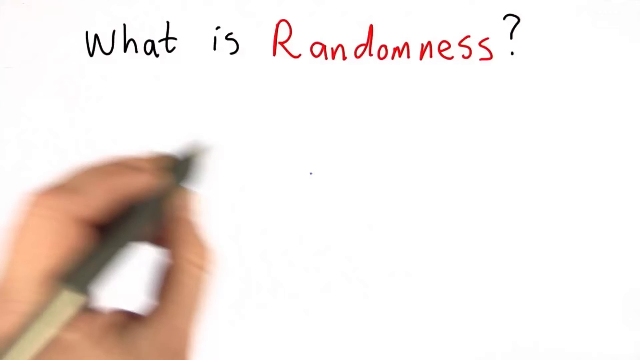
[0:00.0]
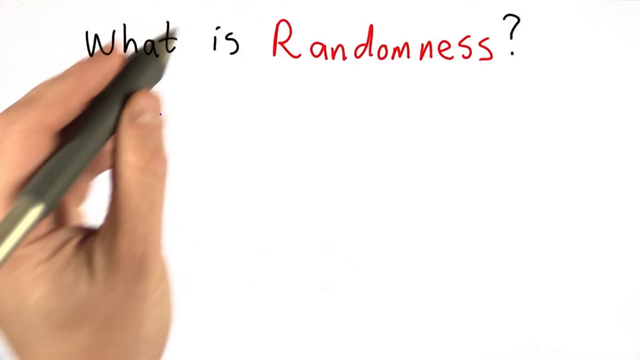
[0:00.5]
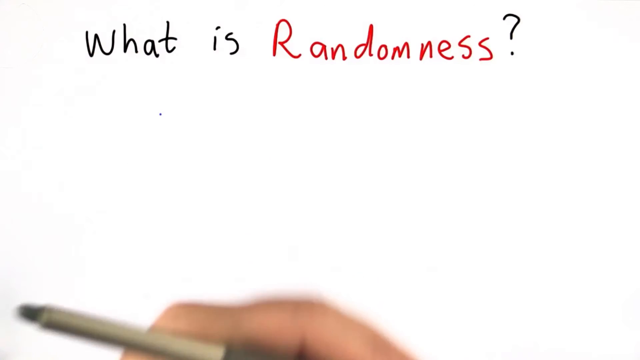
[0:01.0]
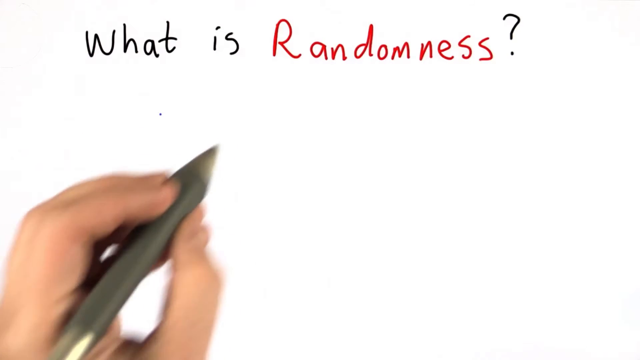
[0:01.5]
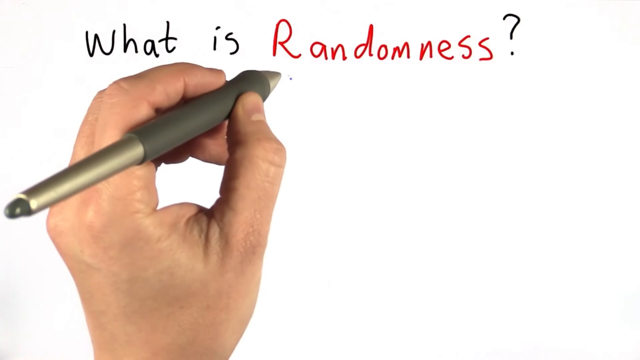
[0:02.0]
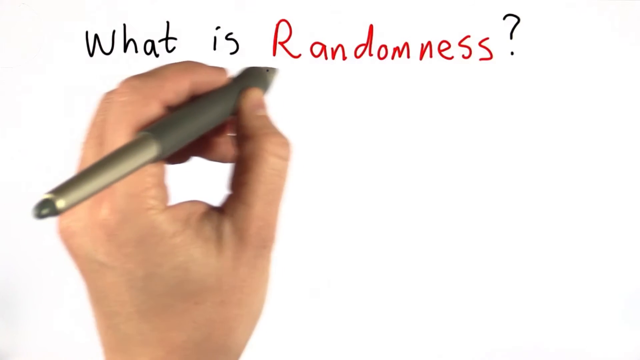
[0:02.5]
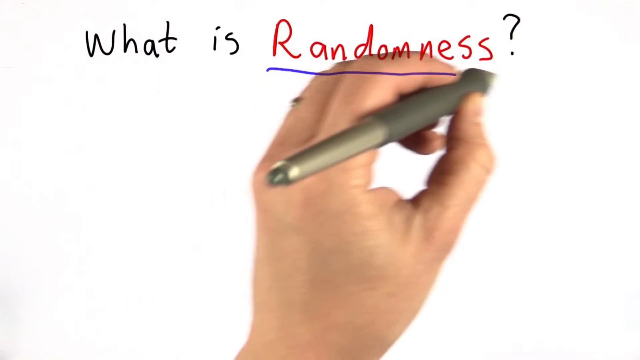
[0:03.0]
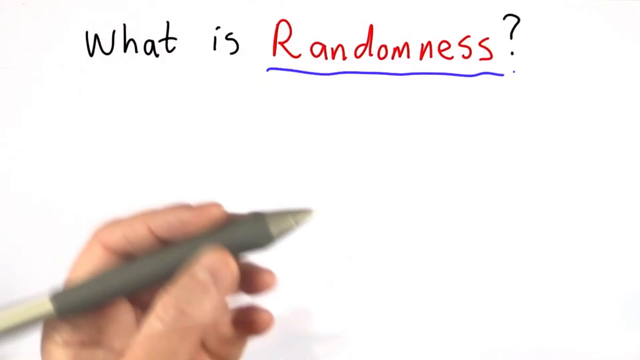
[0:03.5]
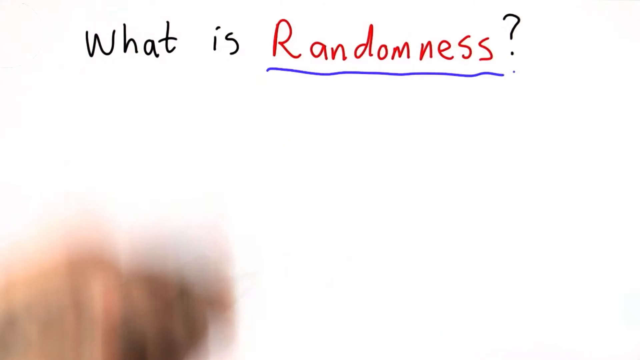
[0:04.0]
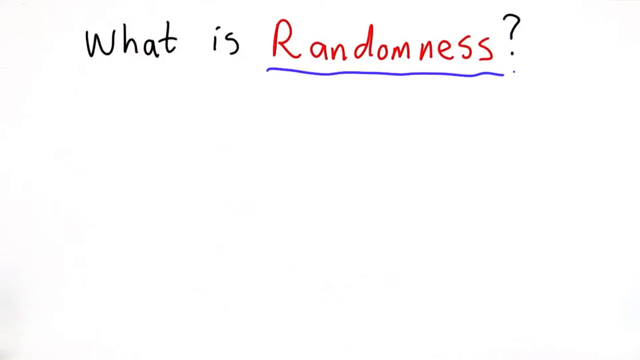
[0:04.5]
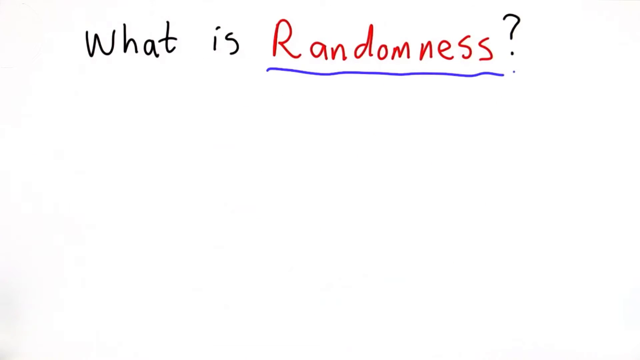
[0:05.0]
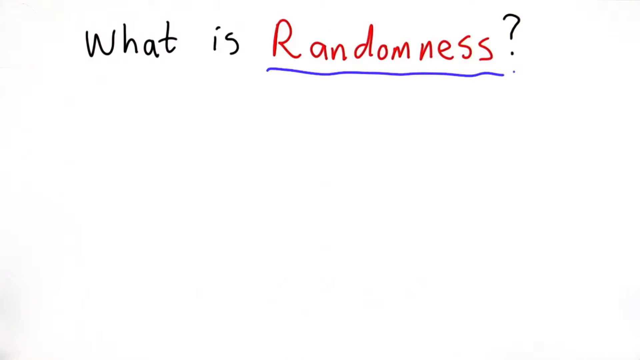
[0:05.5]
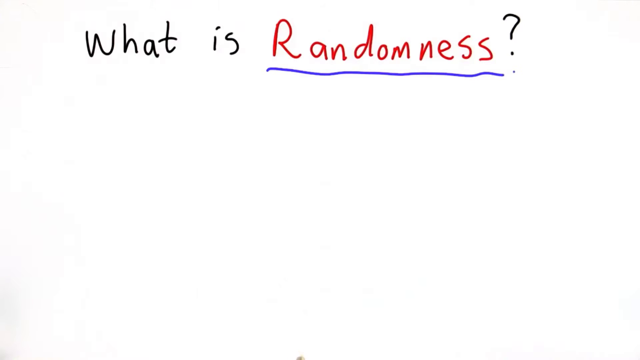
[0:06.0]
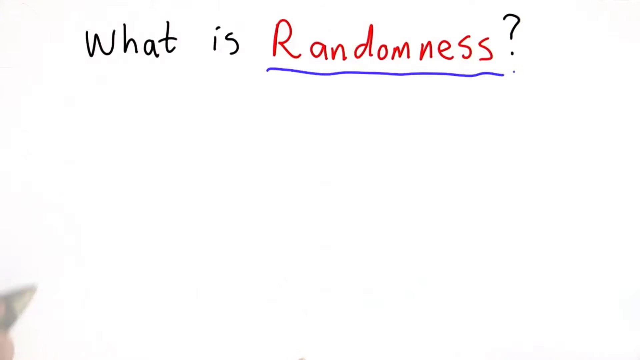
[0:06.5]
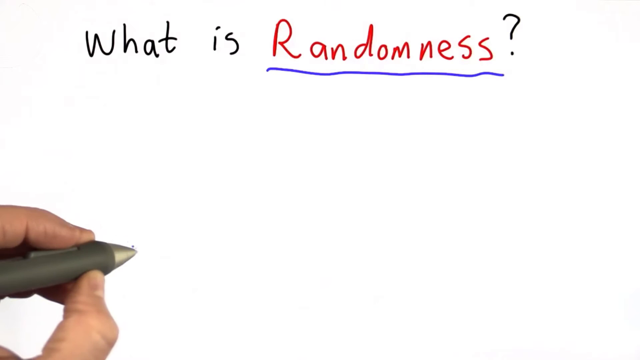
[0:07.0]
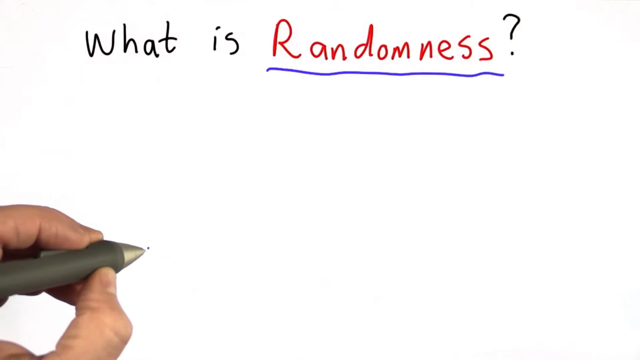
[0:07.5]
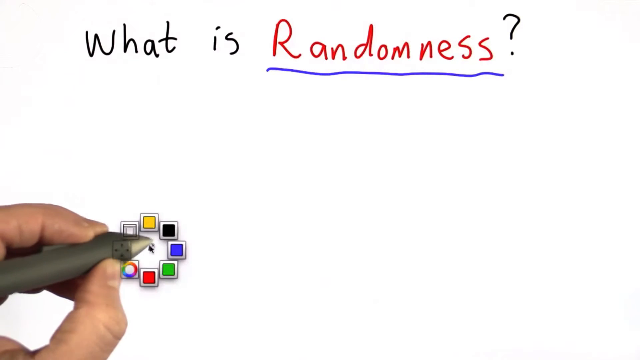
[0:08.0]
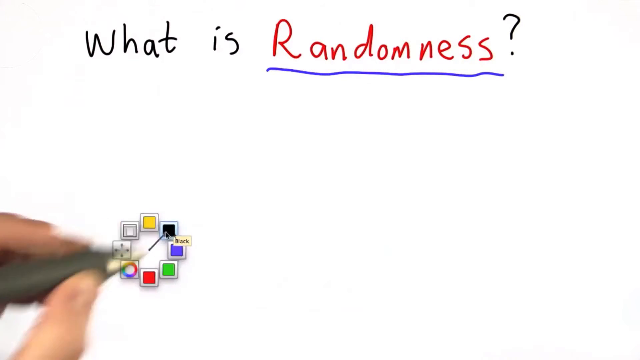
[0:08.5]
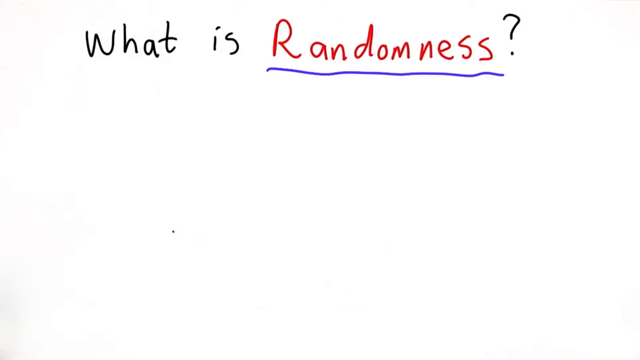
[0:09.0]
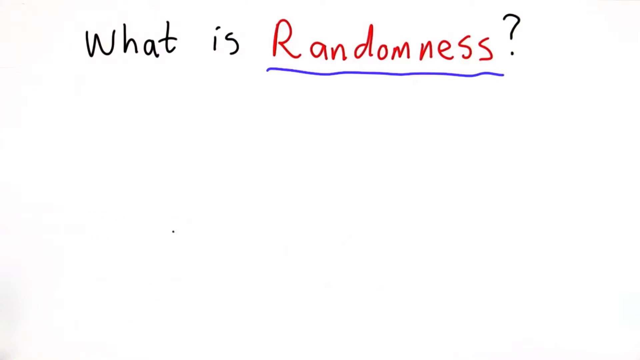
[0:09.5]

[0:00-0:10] The screen is white. Across the top, someone has written "what is" in black, followed to the right by "randomness" in red and then a black question mark. A left hand holding a gold-colored marker puts it onto the screen; wherever it touches, a dot appears, and the person is able to draw on the screen. The person puts the pen under the word "randomness" and swipes to the right, underlining it with a blue line. He then goes to the bottom left-hand corner of the screen and taps it, and little squares form a circle, each square a different color; by tapping one of the squares he can choose the color of his pen.